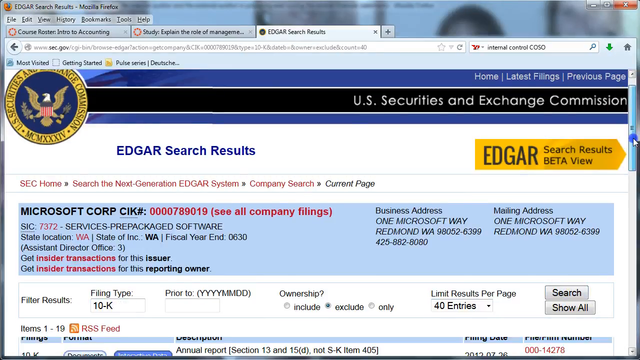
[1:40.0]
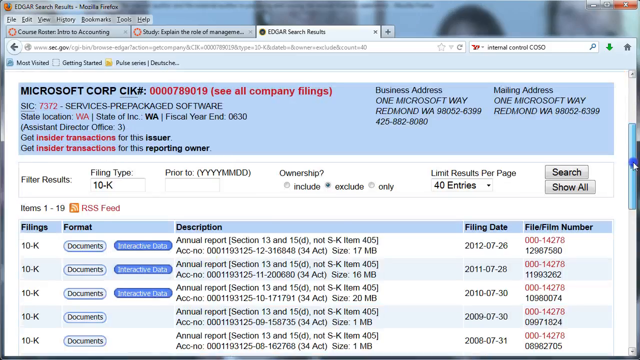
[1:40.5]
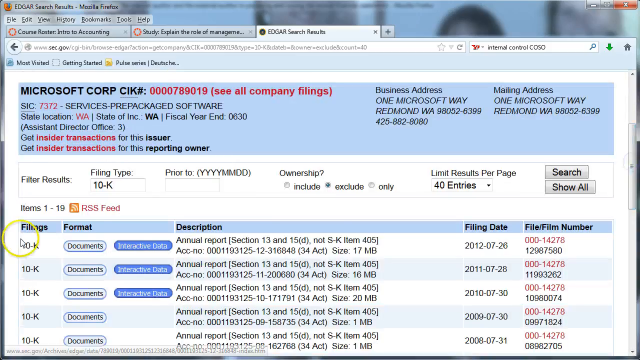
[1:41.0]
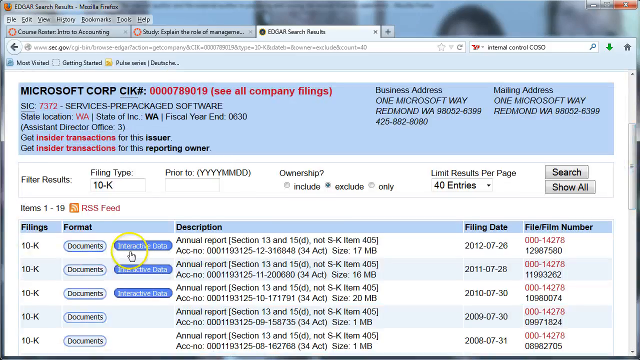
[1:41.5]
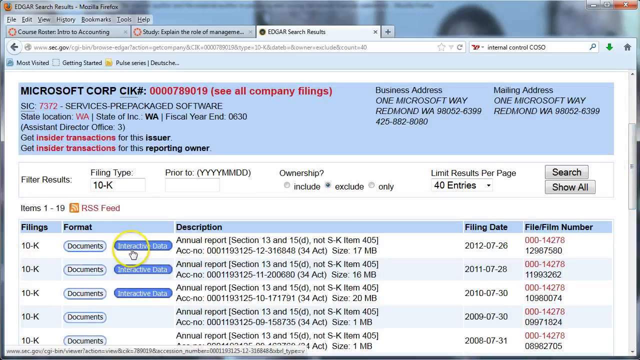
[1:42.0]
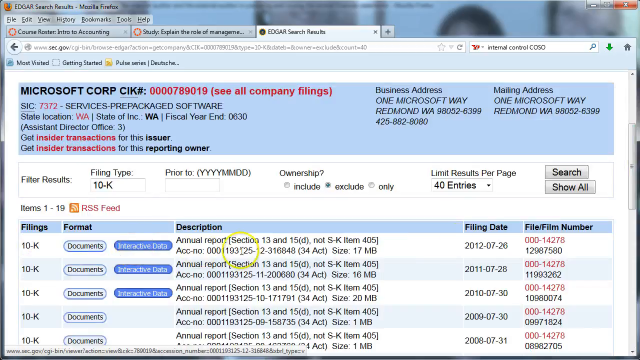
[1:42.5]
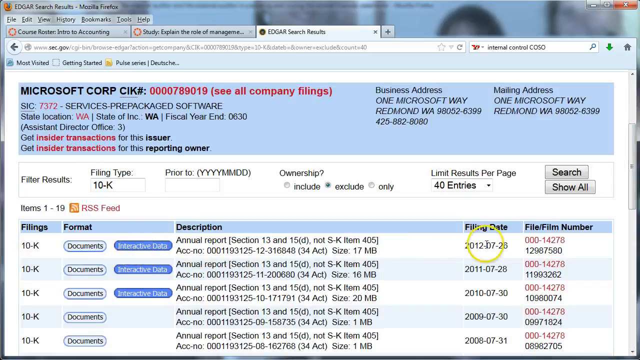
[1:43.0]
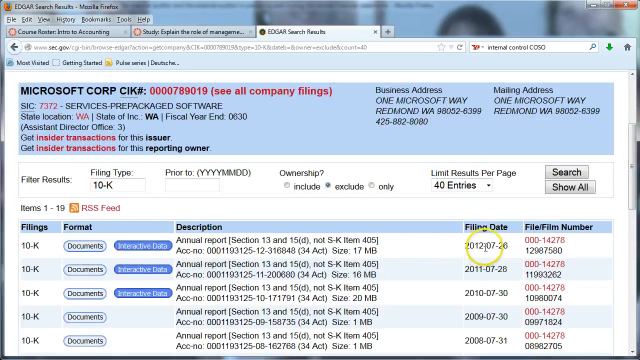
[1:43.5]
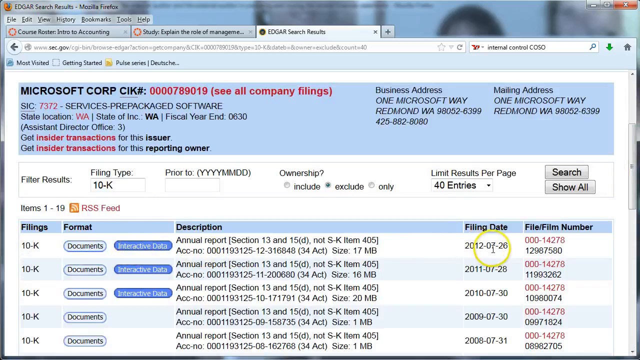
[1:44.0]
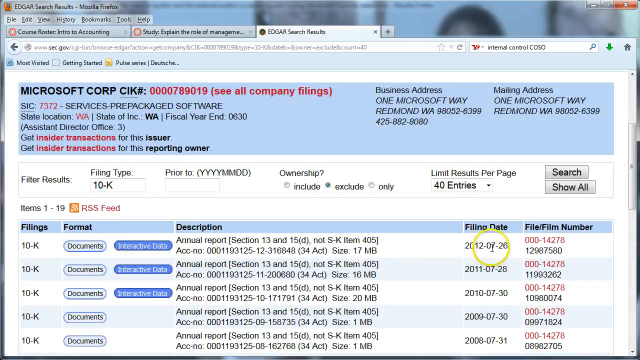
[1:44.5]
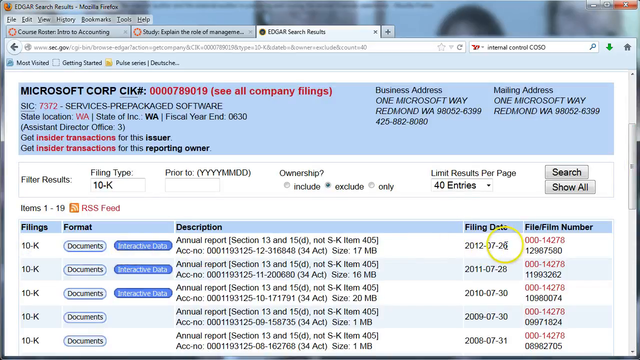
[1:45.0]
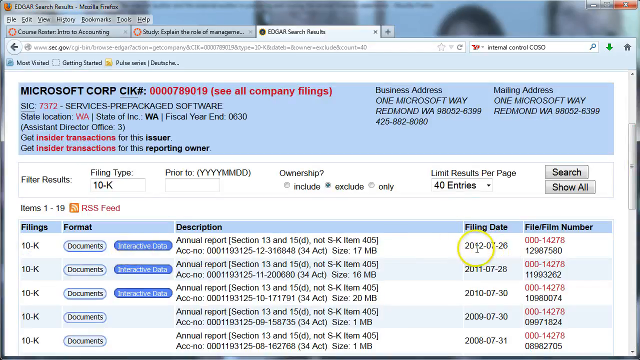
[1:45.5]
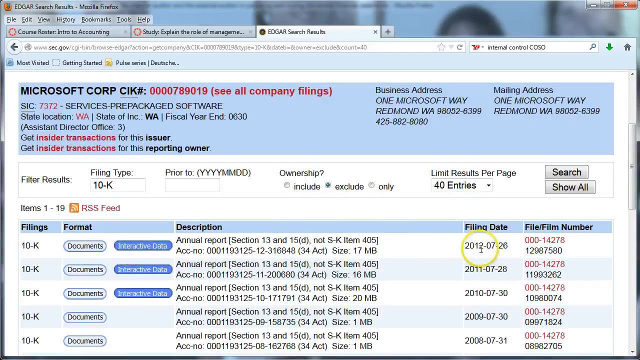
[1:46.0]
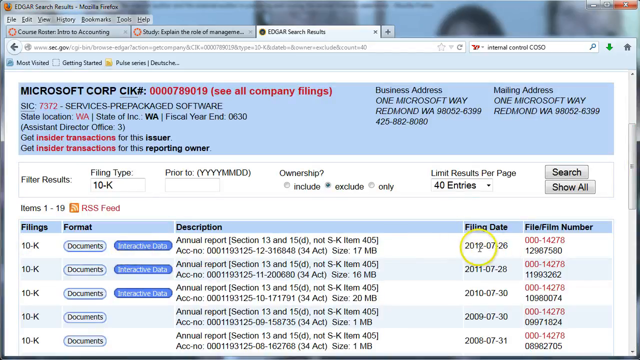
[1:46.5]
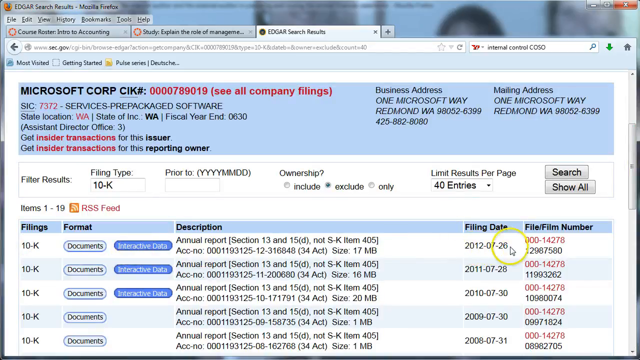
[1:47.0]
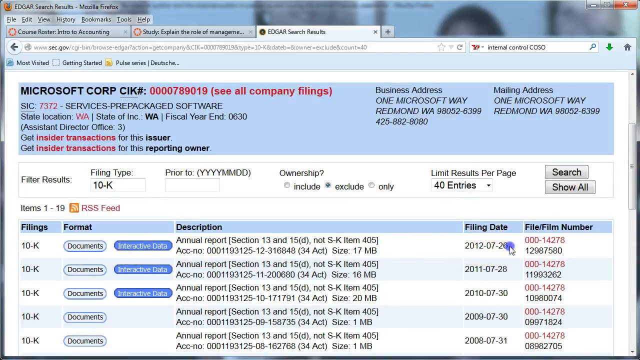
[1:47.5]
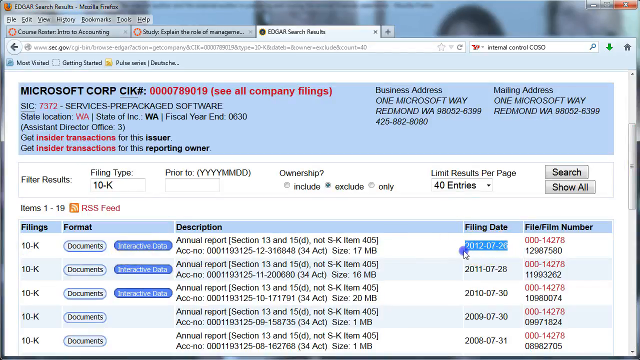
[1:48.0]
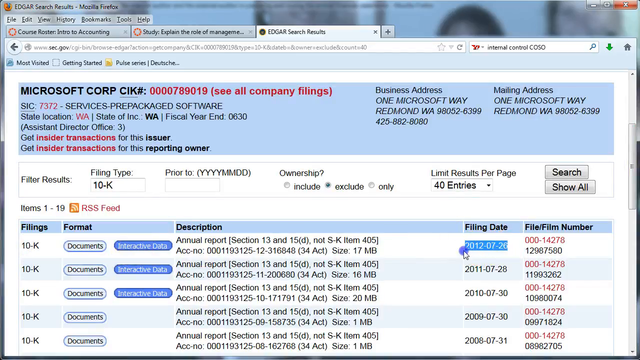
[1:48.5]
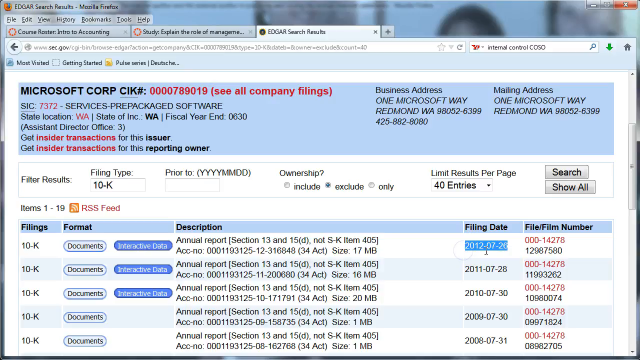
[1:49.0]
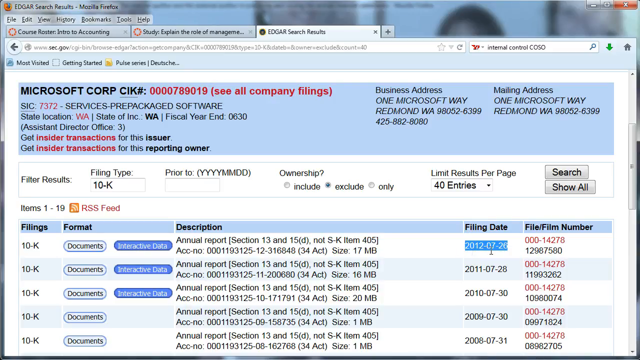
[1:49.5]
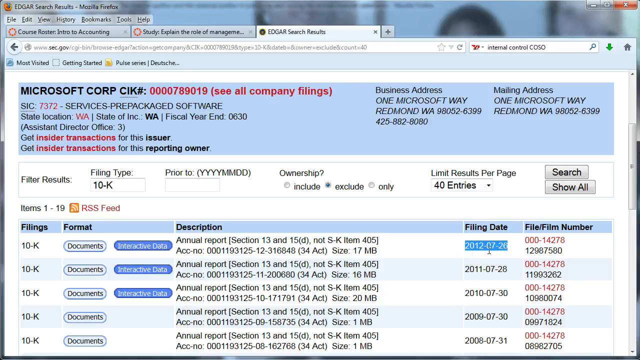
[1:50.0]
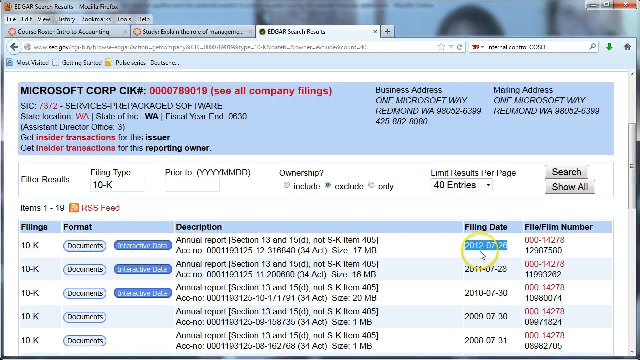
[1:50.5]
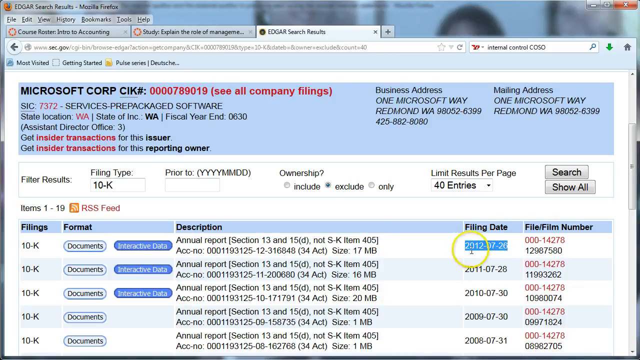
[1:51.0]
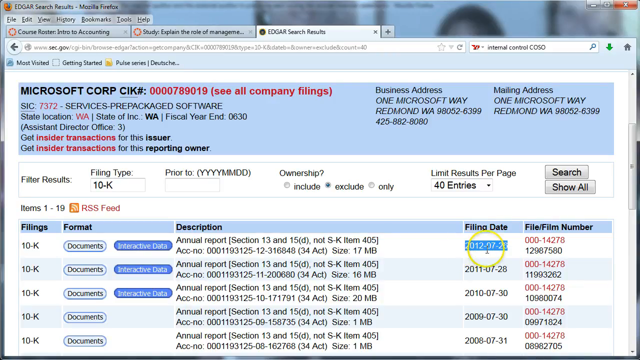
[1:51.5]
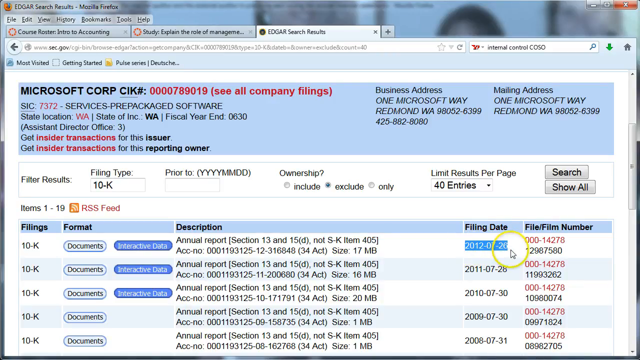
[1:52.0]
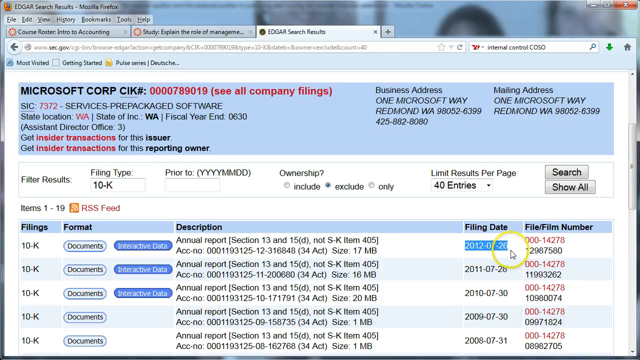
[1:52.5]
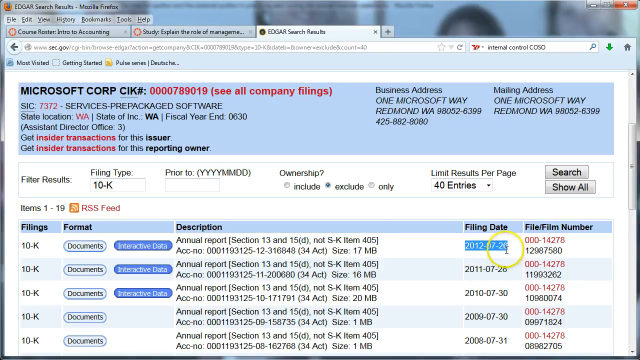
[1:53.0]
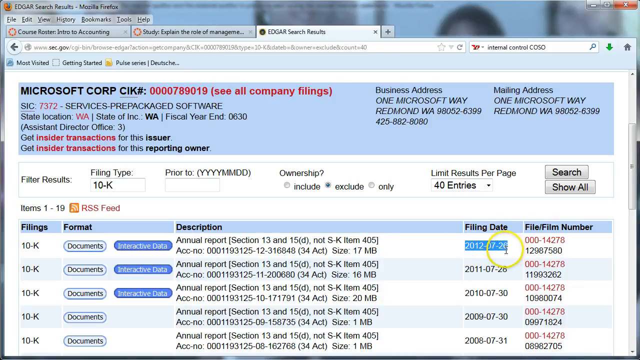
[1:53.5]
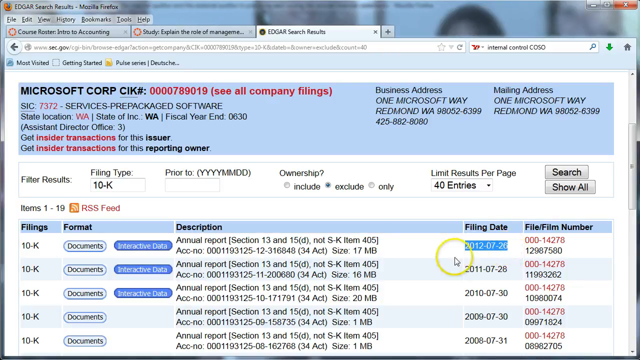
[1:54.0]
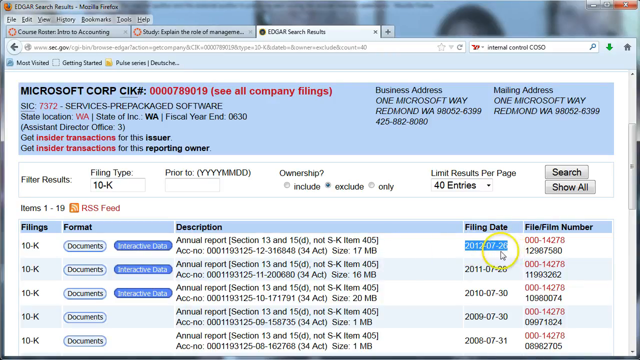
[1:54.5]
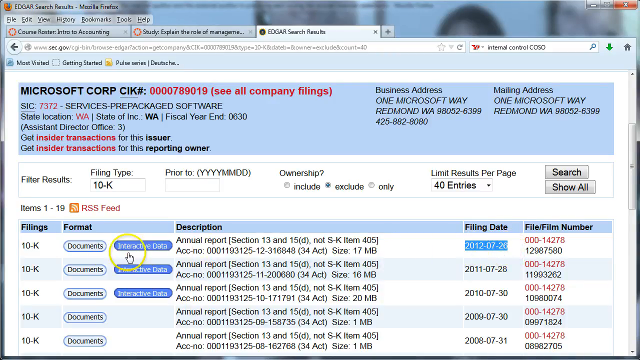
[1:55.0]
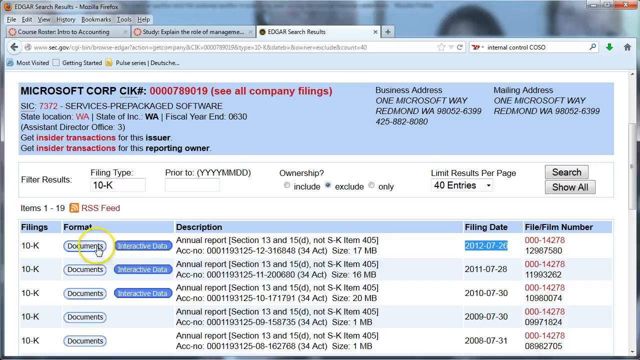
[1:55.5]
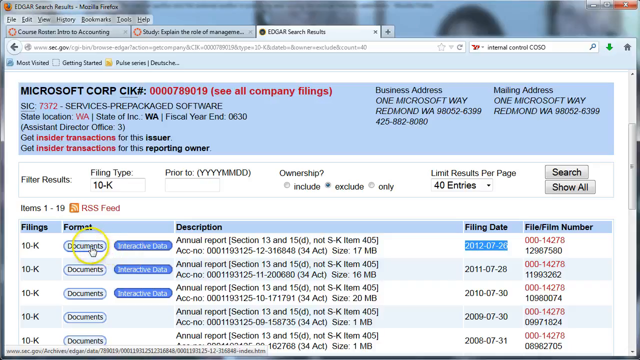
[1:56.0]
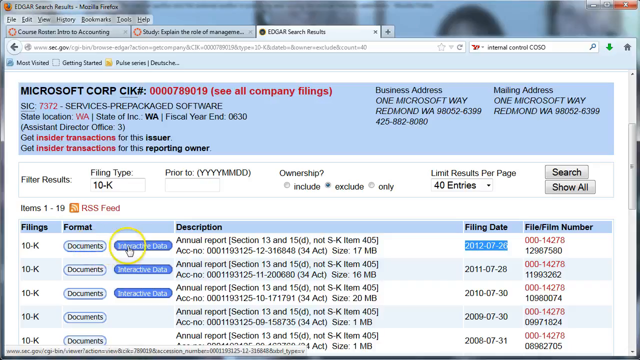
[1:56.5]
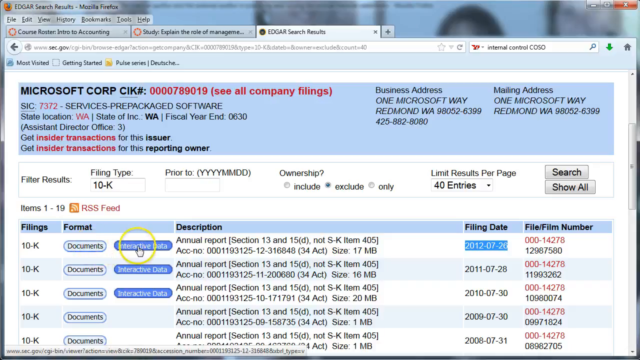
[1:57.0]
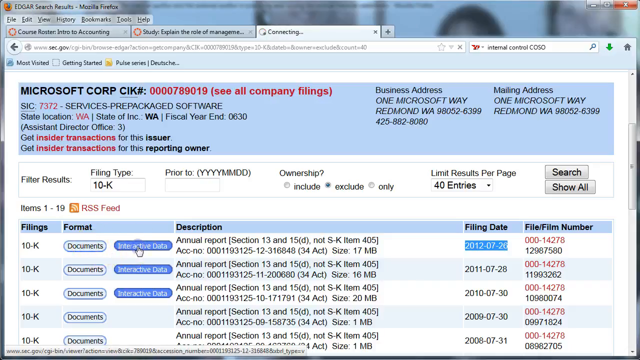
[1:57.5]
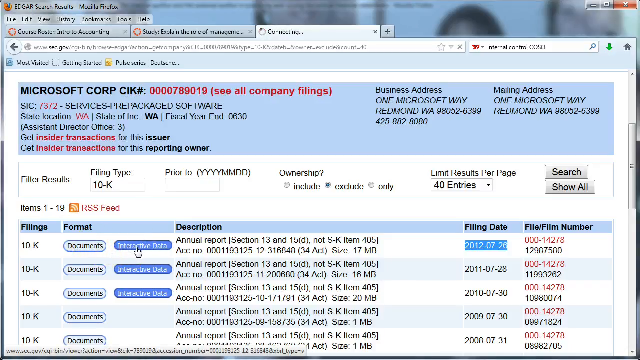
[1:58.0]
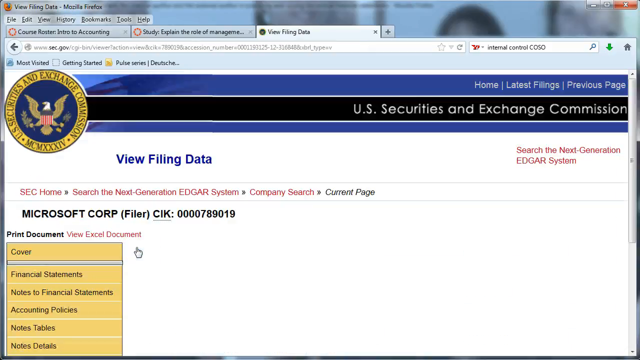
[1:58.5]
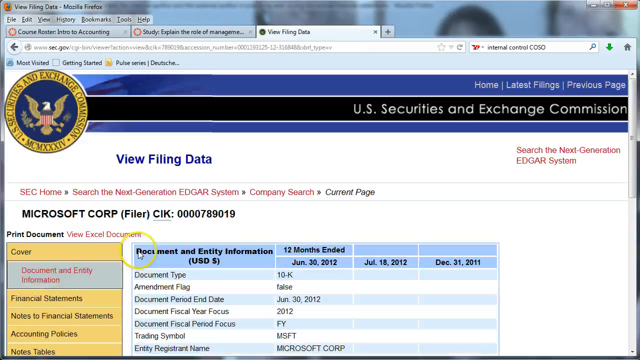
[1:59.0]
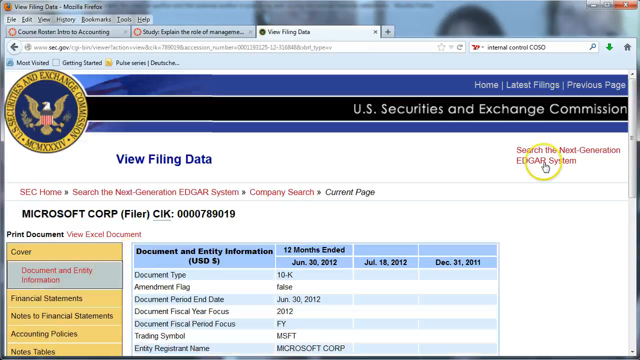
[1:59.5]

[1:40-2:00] In the filing results, the cursor appears to hover over the filing date column. The filing type showing for Microsoft is the annual report. The first result's filing date, July 26, 2012, is highlighted. Under the format column there are a Documents button and an Interactive Data button. The user clicks Interactive Data, which opens another page, but the shot cuts off before it is shown.